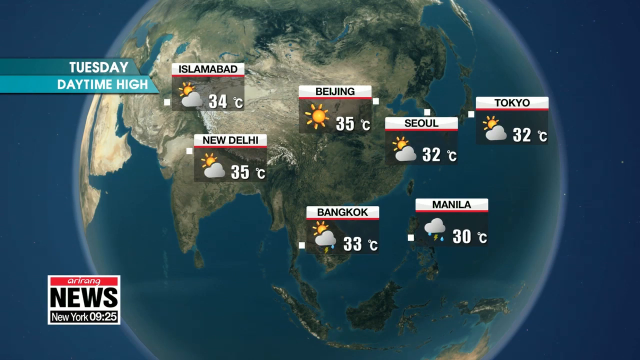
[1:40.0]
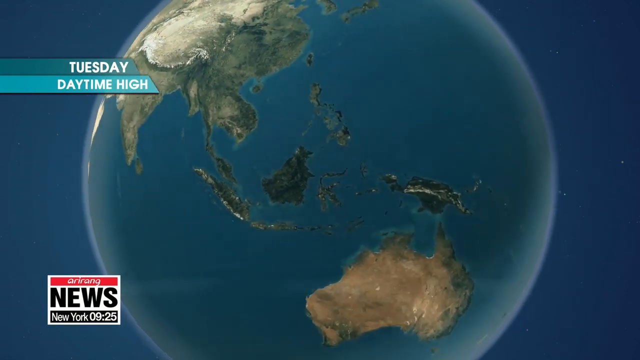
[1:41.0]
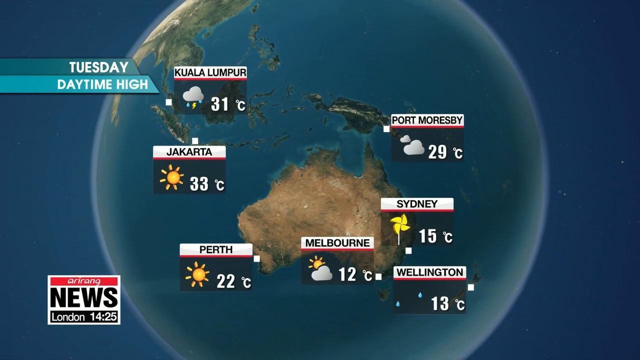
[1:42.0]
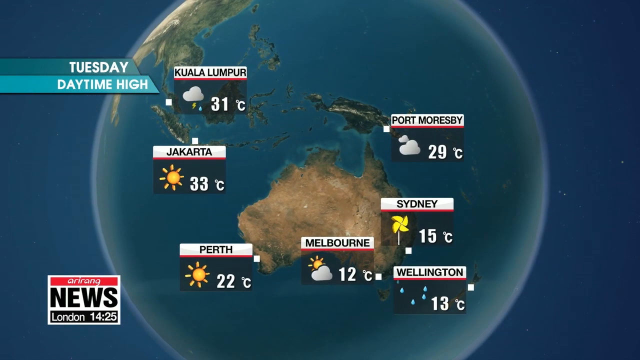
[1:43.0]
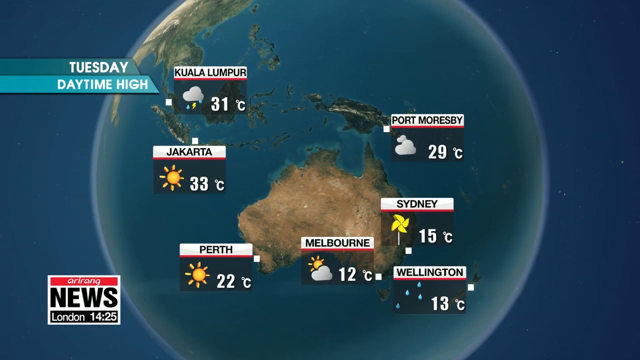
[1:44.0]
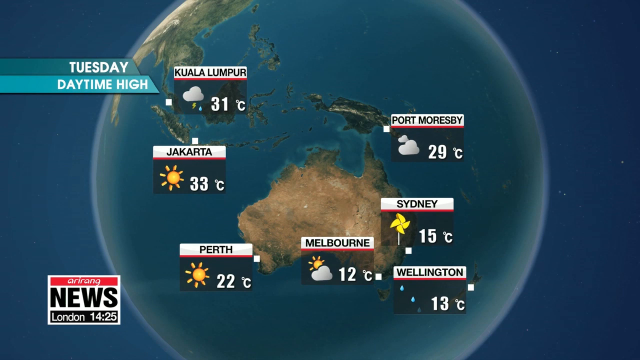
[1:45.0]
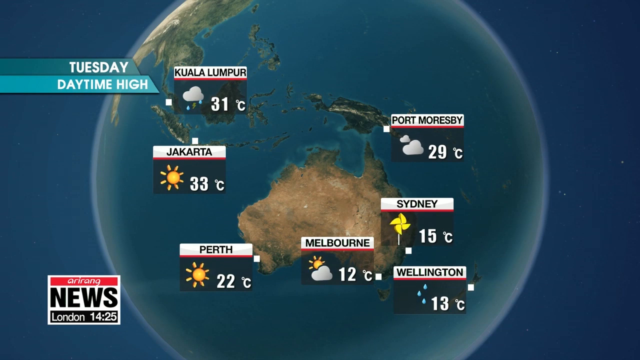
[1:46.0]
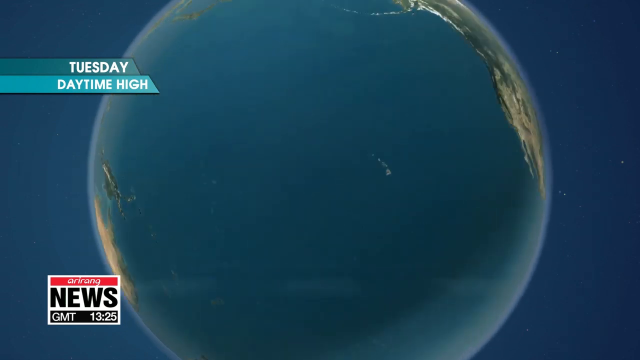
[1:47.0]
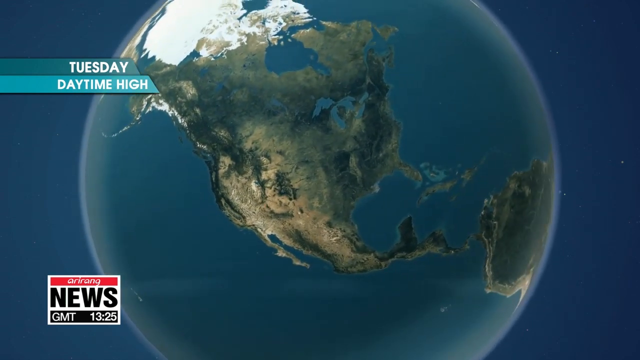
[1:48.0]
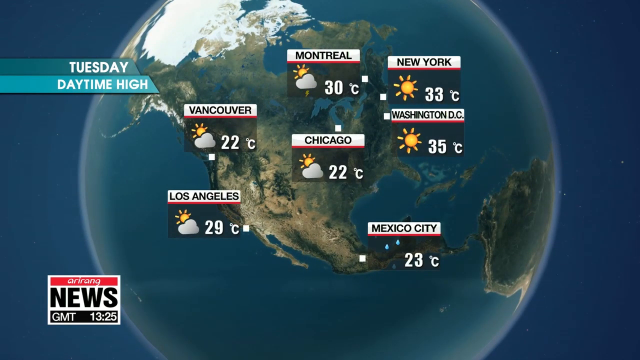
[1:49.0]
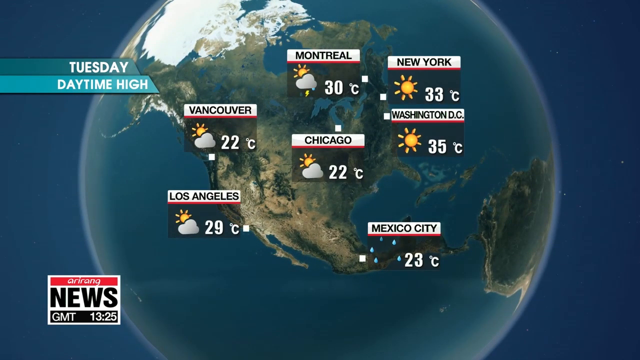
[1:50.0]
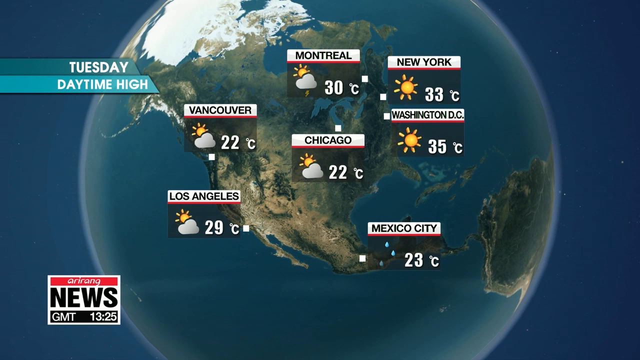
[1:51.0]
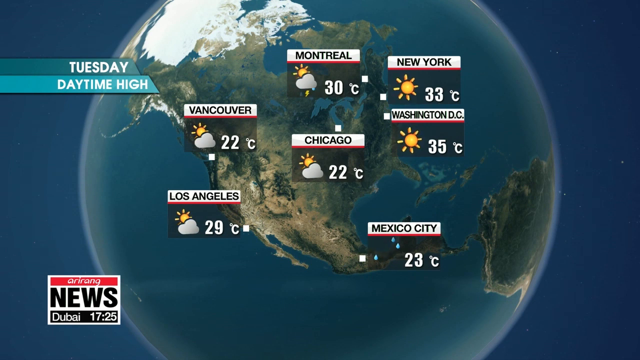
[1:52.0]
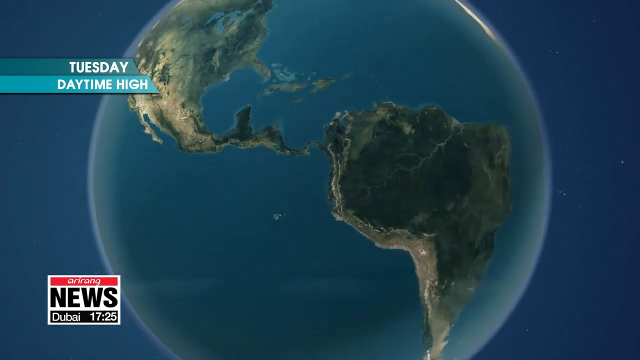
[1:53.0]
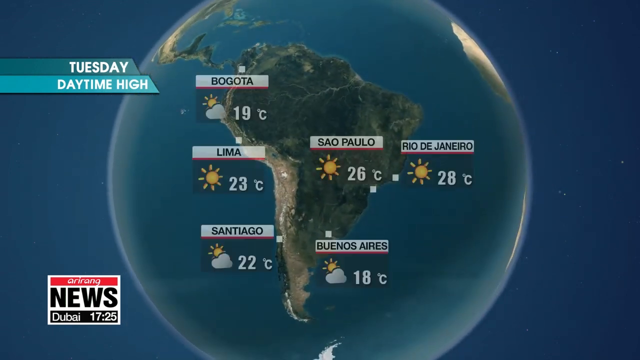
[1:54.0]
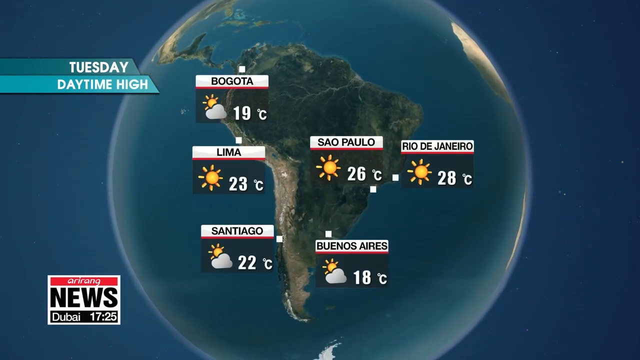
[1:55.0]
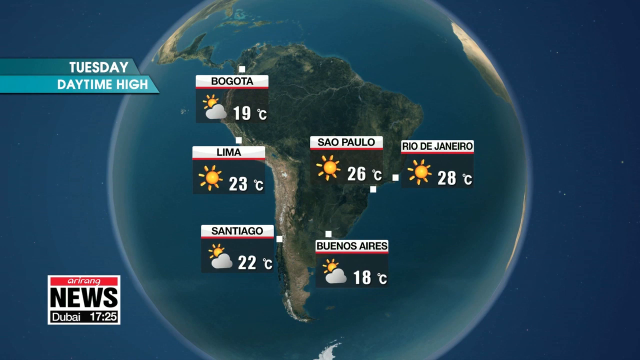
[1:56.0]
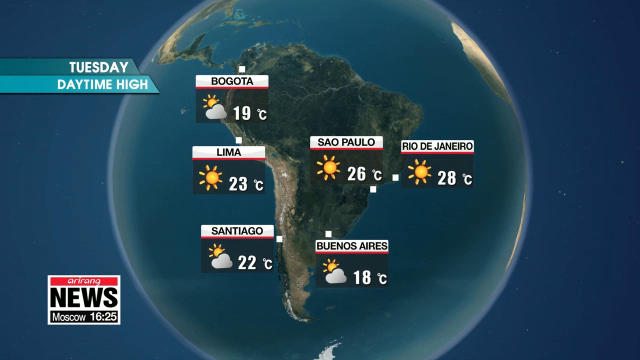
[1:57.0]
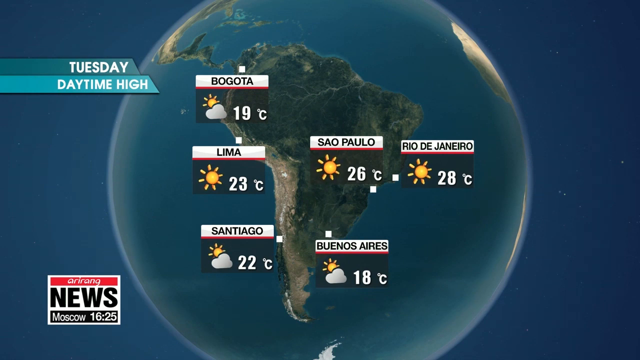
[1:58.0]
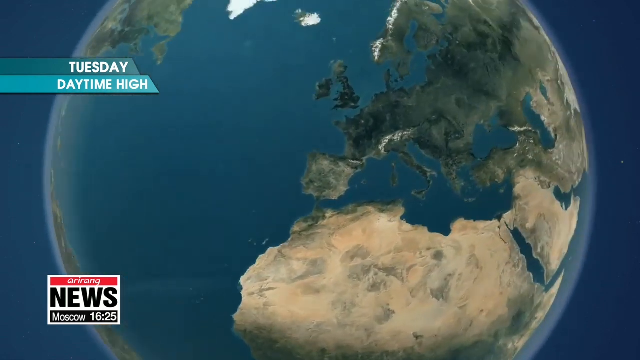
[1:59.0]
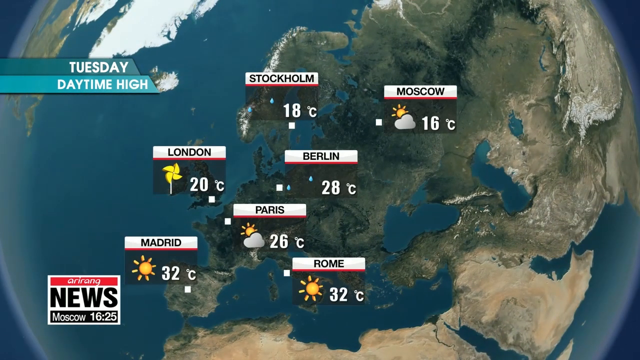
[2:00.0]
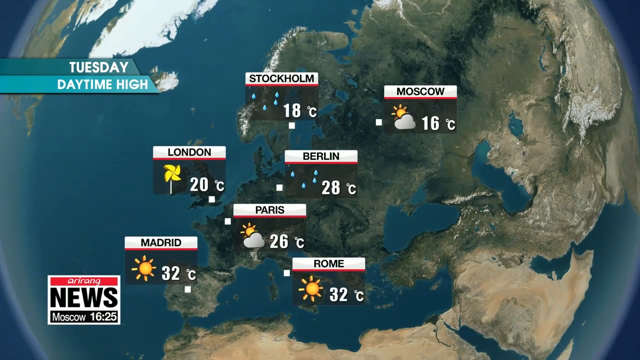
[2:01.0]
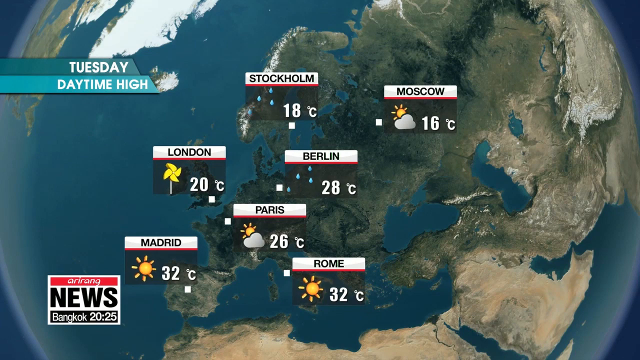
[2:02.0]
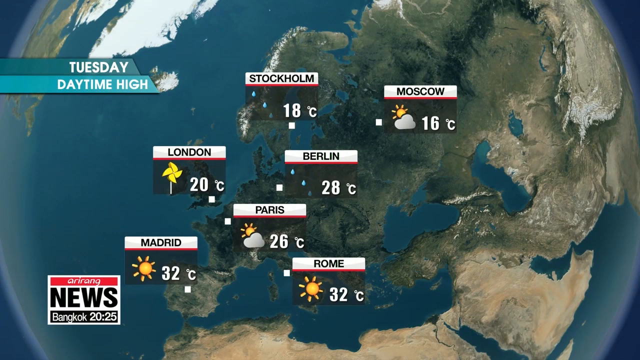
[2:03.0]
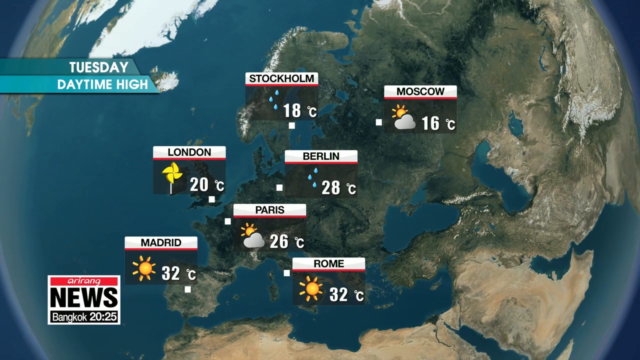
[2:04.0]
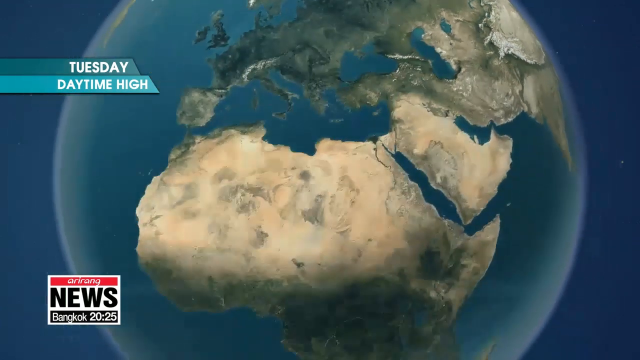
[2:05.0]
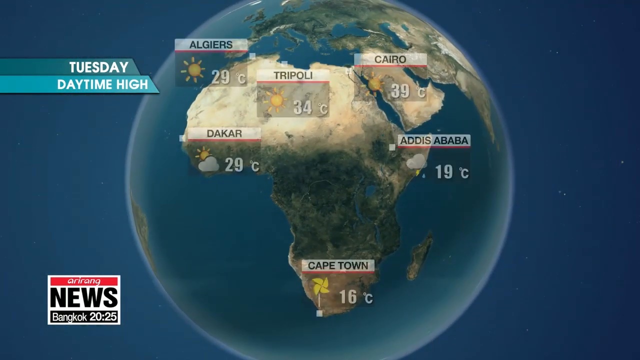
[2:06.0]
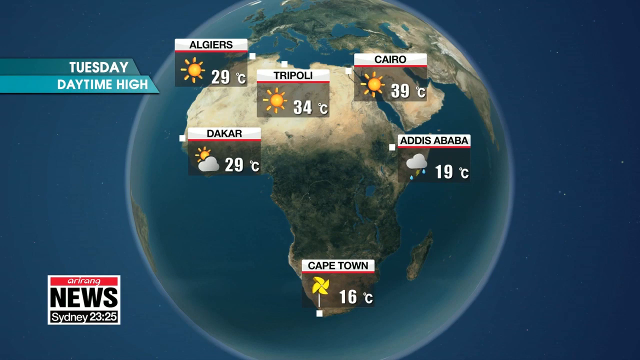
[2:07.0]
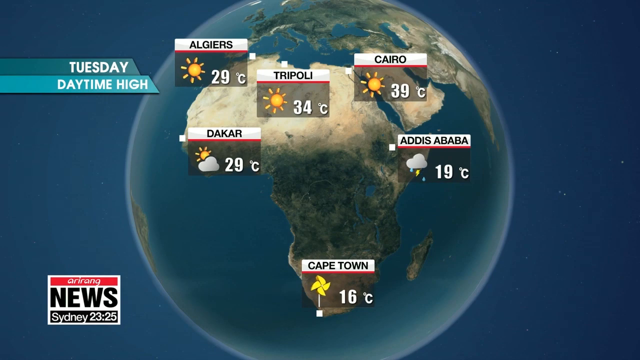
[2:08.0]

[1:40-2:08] A thing that looks like an earth spins around and shows various places and their weather. Some places are sunny and some are raining, with raindrops shown. The text reads "Tuesday daytime high." Places shown include Bogota, Lima, Stockholm, Moscow and London. Stockholm, Berlin and Addis Ababa are shown with rain, while Istanbul has a bit of sun and some clouds. The globe keeps spinning, showing different places and their weather.